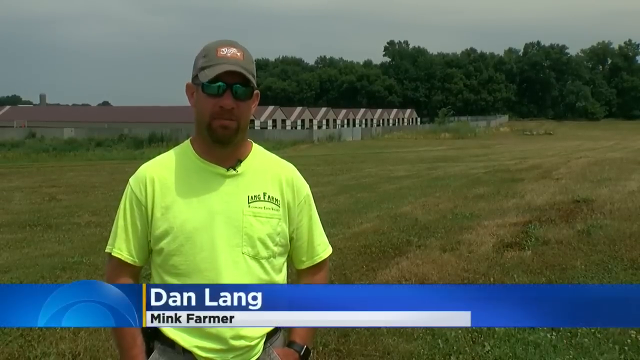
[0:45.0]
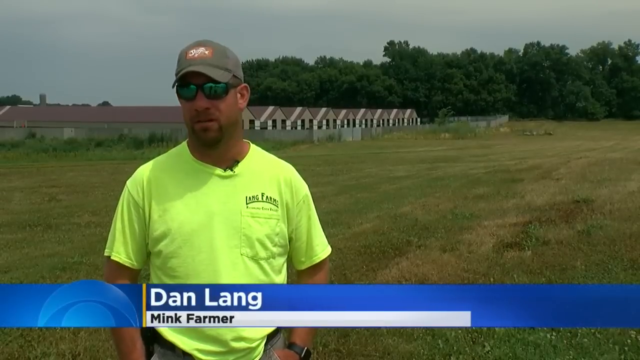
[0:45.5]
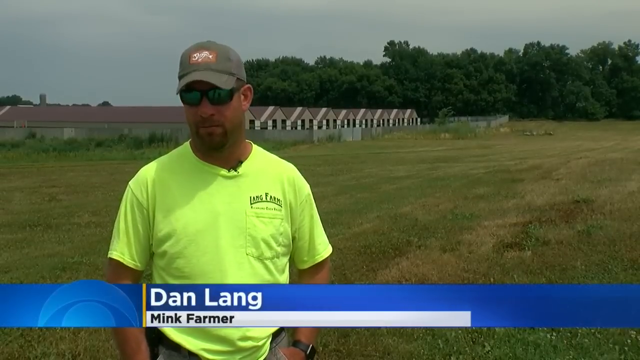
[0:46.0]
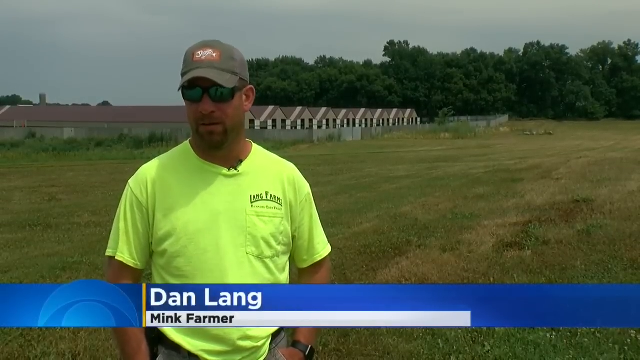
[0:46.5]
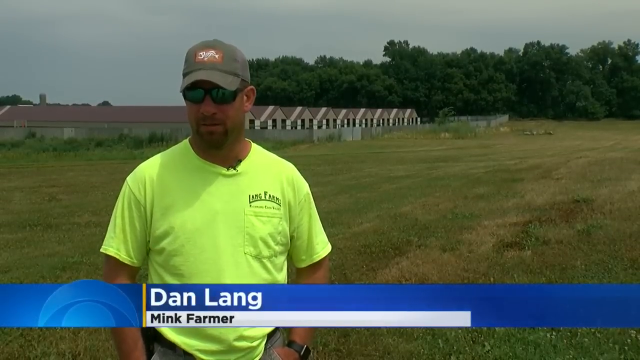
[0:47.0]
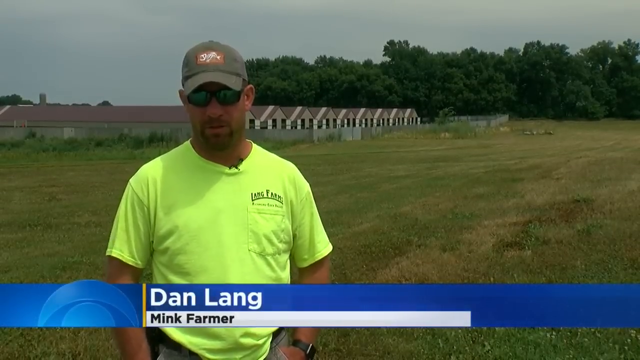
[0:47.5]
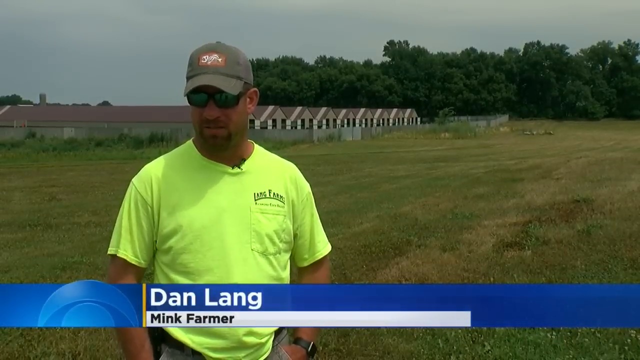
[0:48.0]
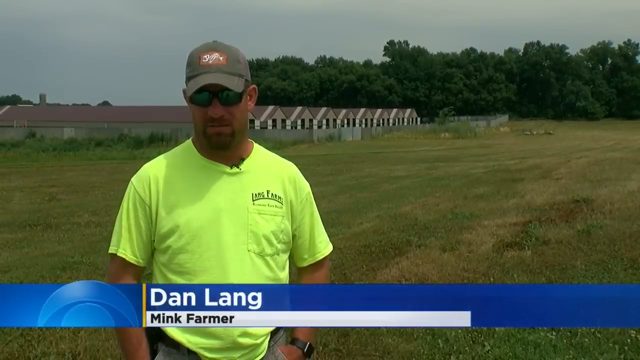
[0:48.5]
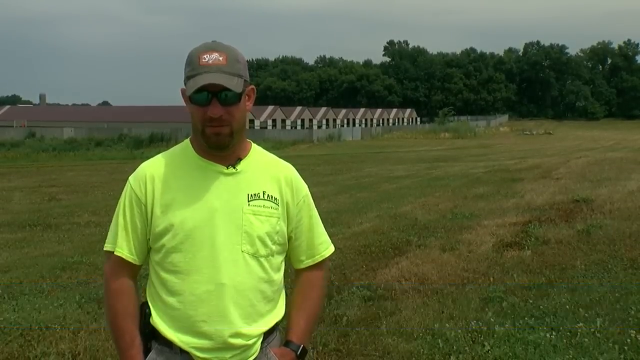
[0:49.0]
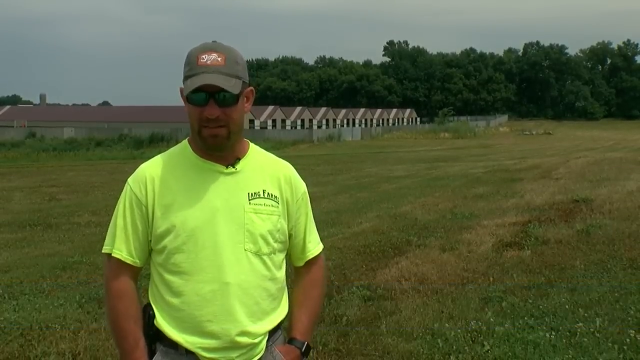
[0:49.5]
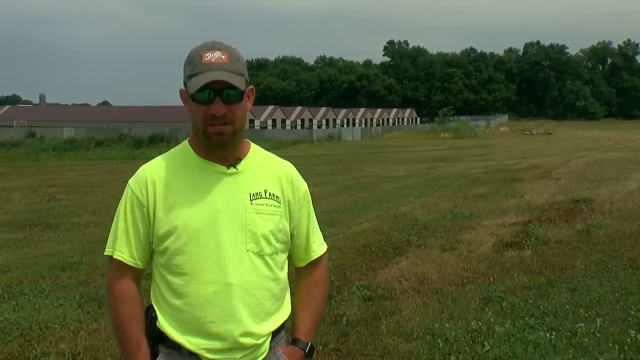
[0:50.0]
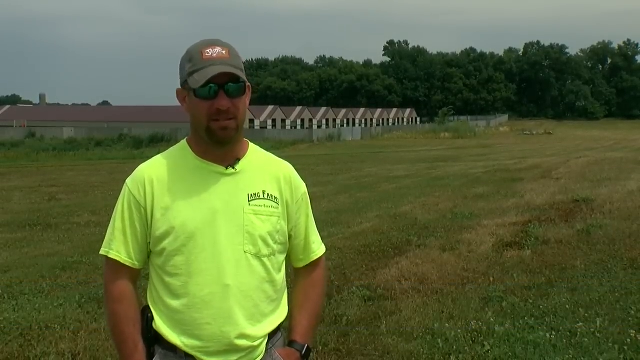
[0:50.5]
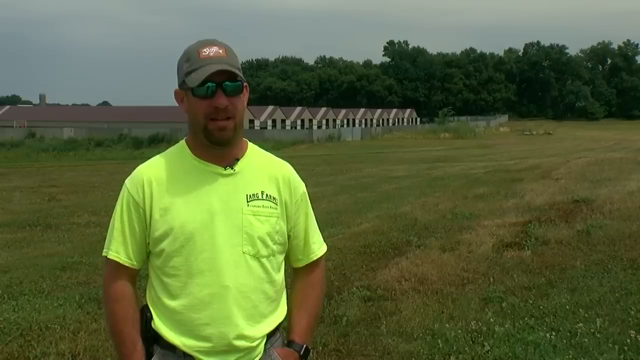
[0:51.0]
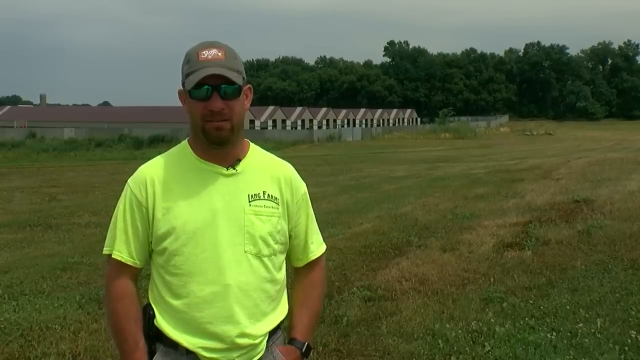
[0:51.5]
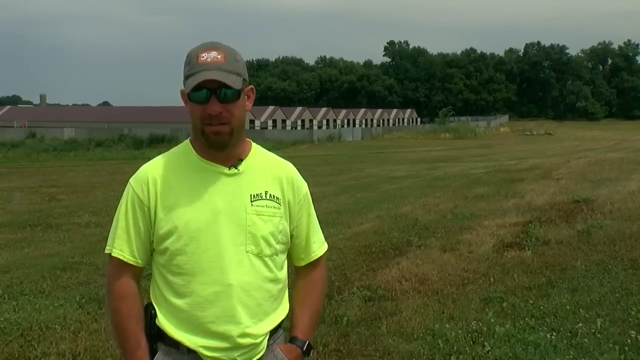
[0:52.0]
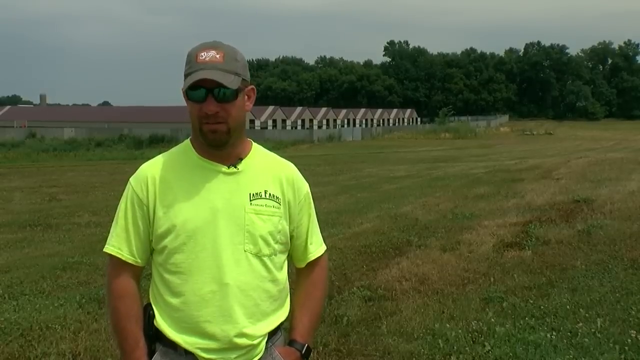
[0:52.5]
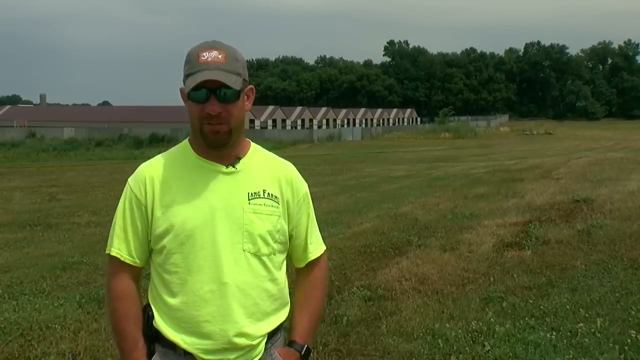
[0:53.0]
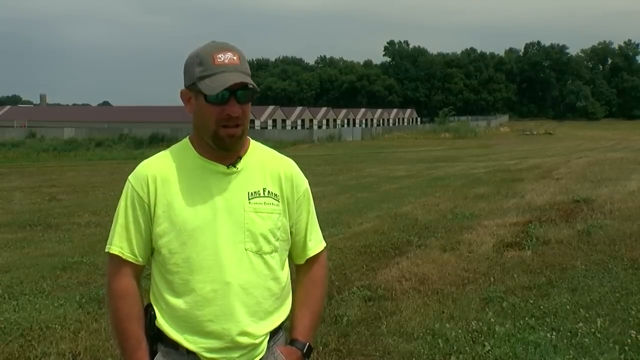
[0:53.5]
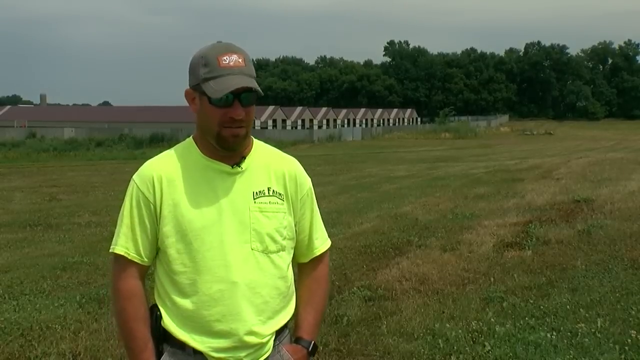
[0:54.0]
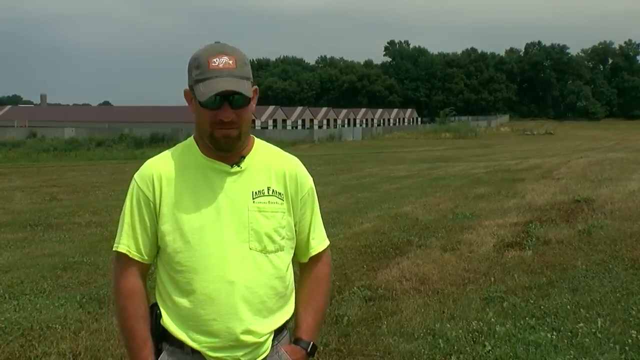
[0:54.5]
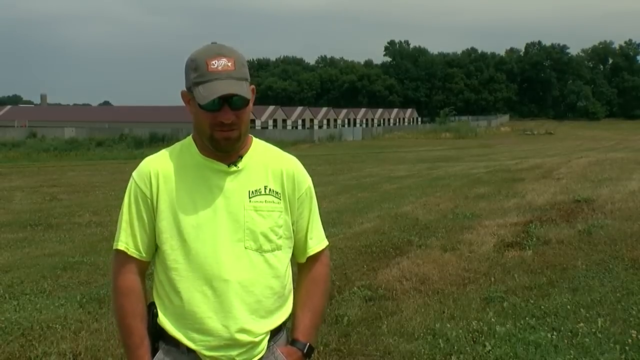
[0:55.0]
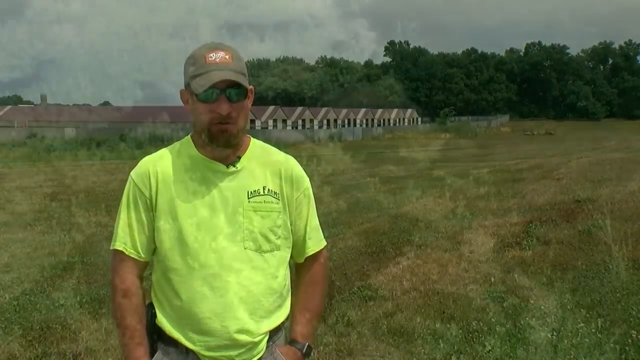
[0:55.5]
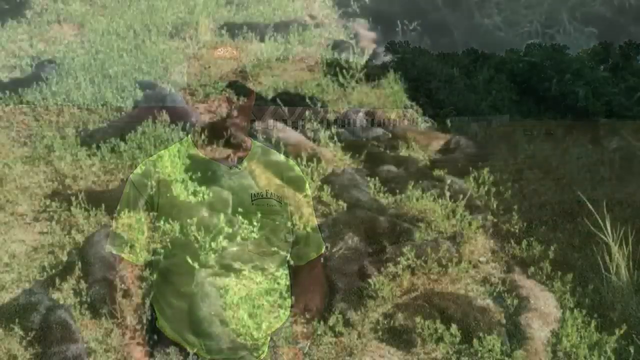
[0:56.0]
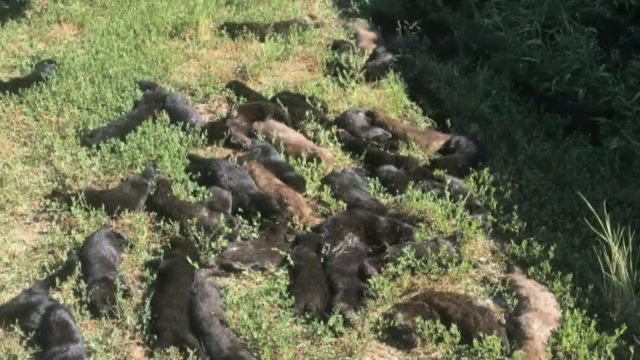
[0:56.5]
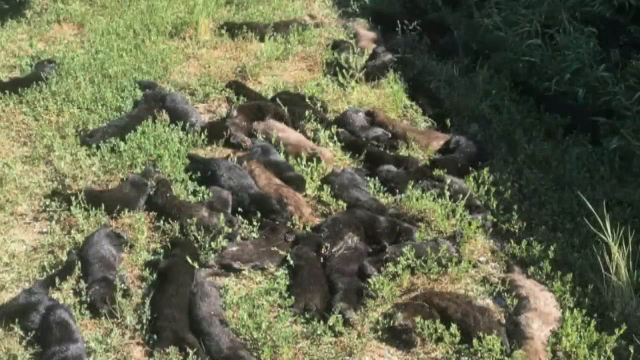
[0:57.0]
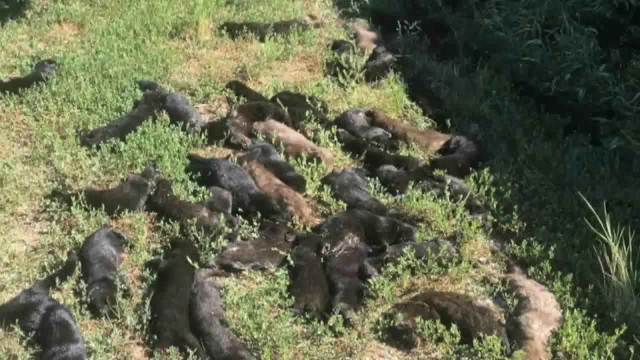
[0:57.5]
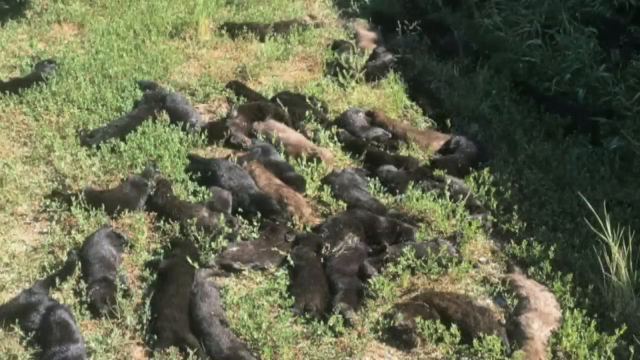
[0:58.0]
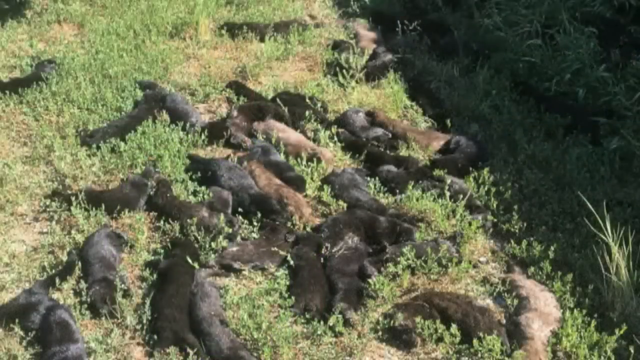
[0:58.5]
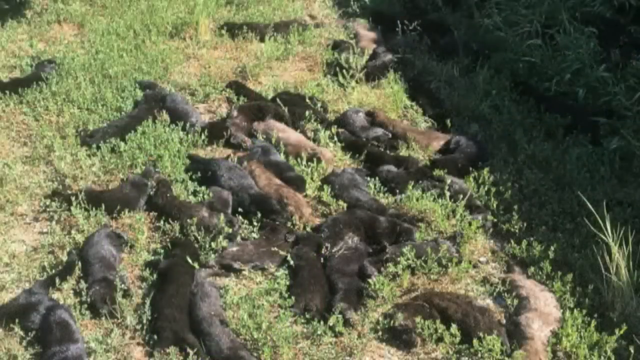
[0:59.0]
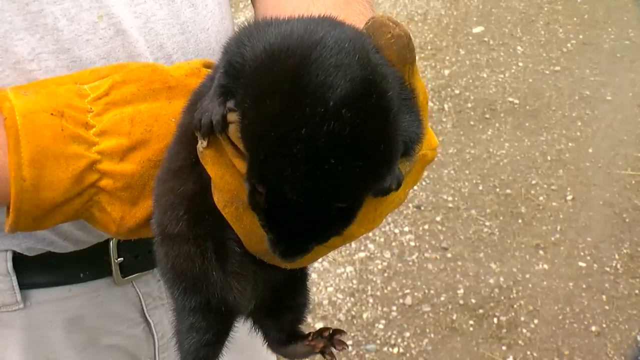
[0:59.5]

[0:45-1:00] The interview with the same man continues, and a caption below him reads "Dan Lang mink farmer." A shot follows of what looks like a bunch of dead minks lying around in a field, maybe 40 or 50 of them. Then someone wearing a yellow glove holds a live mink; it is unclear whether this is possibly Dan Lang or another farm employee. He is on what looks like a gravel road, or possibly a dirt road, possibly right by the farm, with a big field around him.